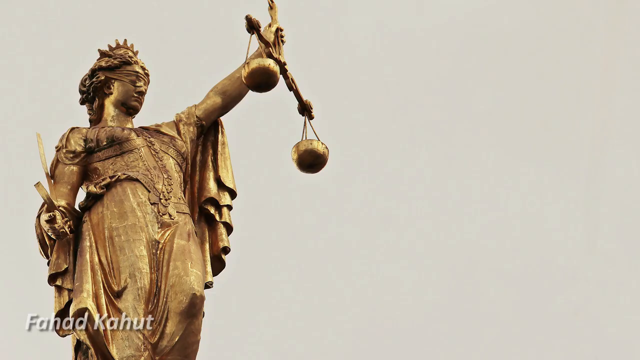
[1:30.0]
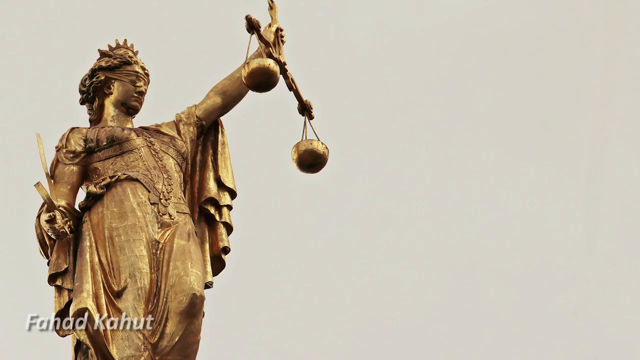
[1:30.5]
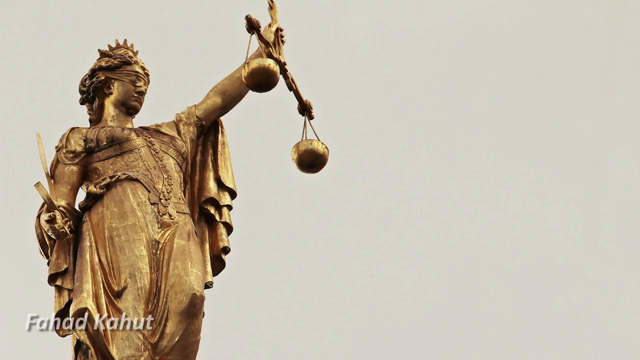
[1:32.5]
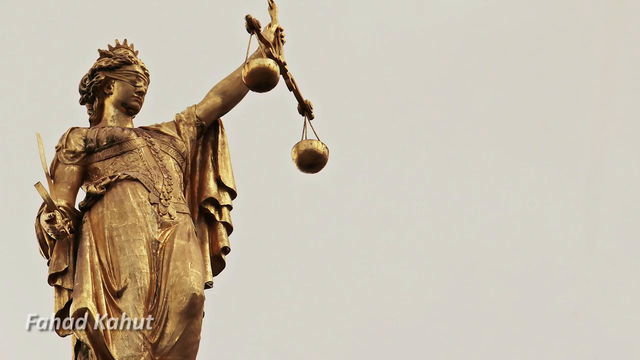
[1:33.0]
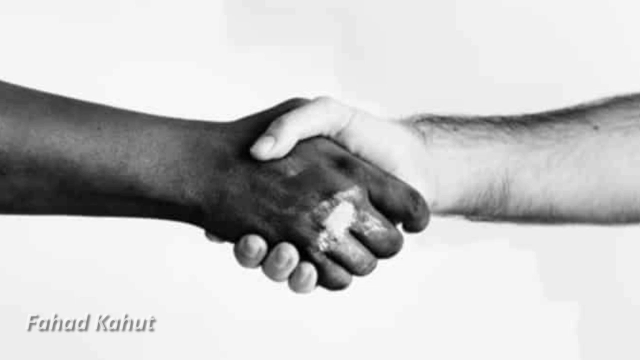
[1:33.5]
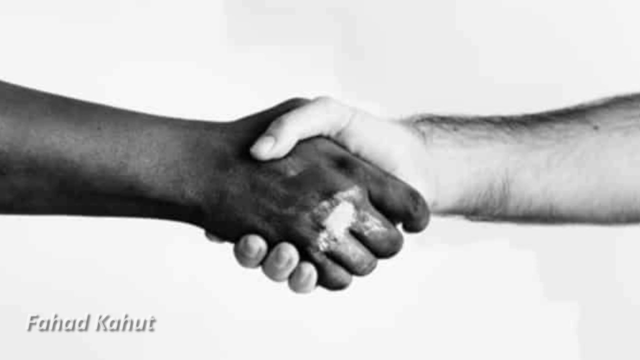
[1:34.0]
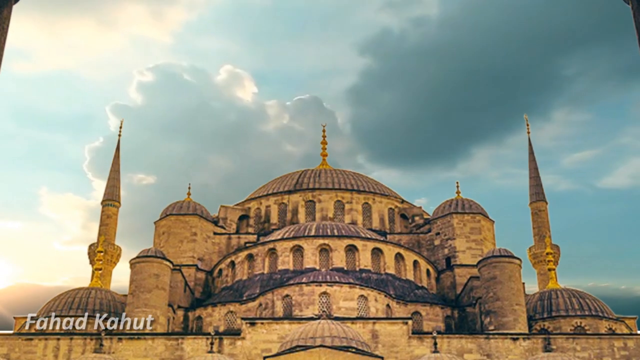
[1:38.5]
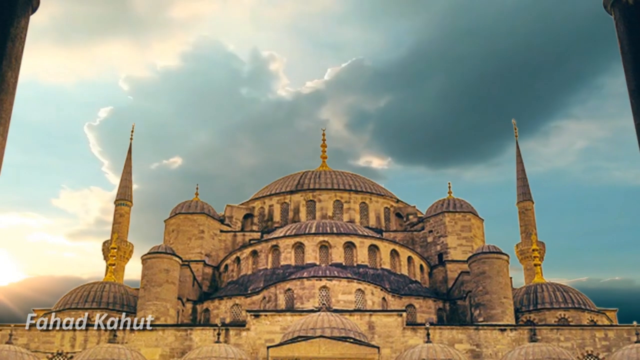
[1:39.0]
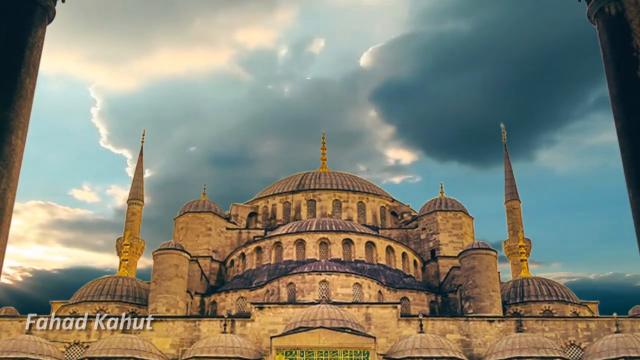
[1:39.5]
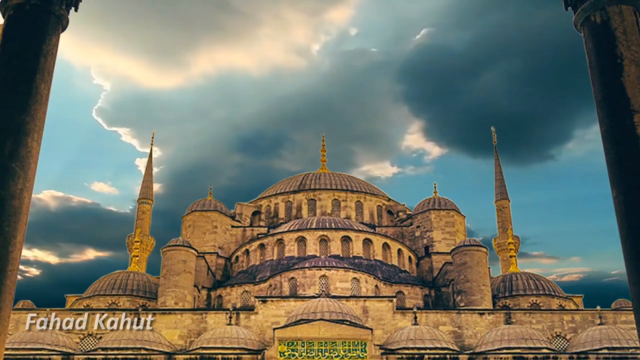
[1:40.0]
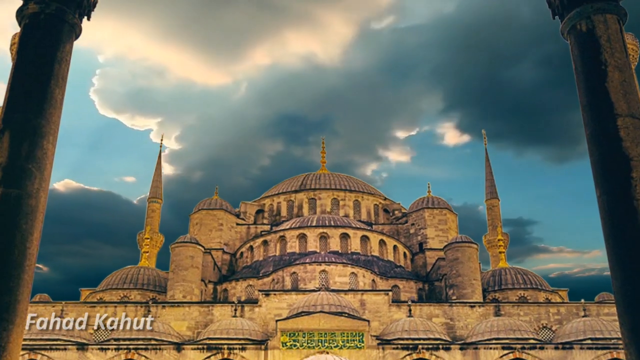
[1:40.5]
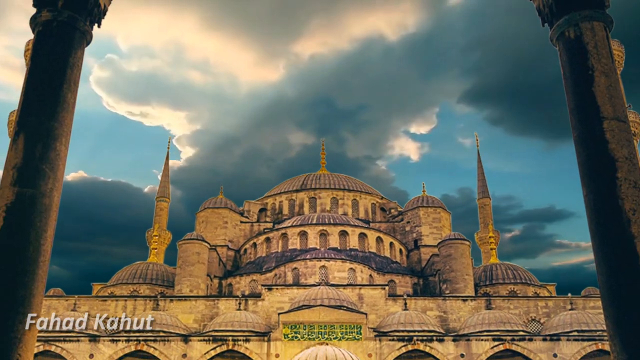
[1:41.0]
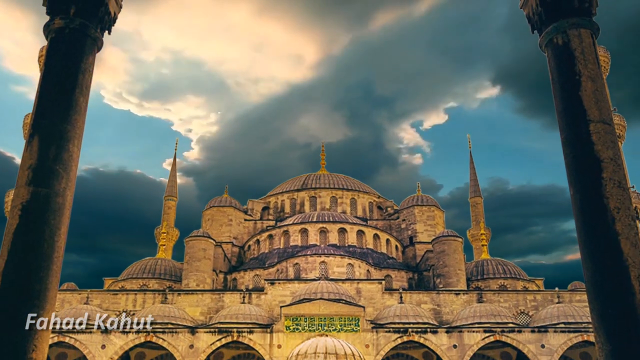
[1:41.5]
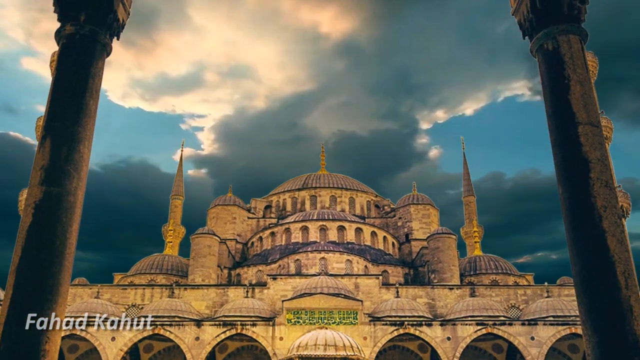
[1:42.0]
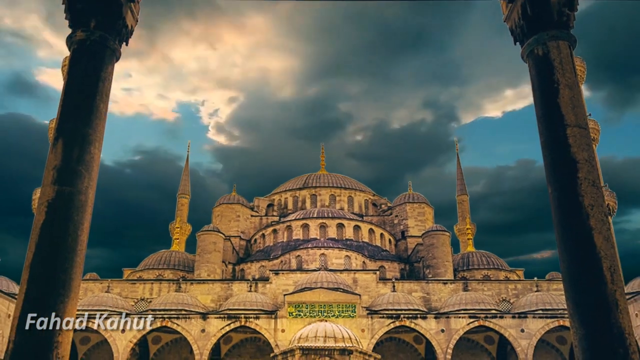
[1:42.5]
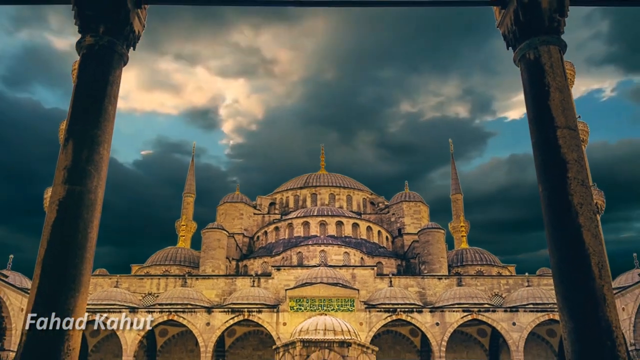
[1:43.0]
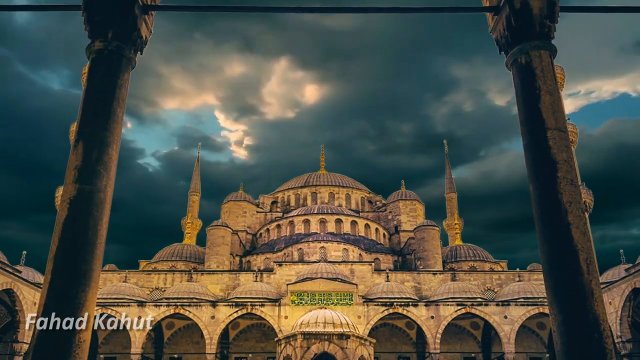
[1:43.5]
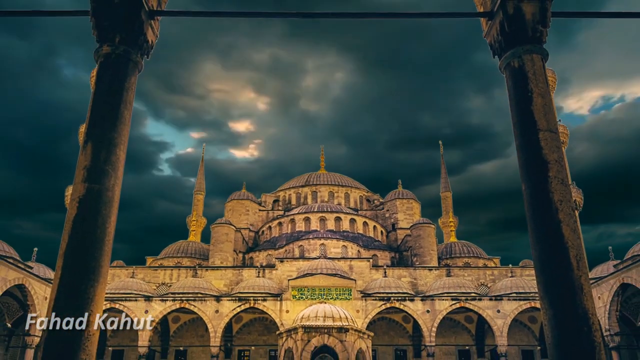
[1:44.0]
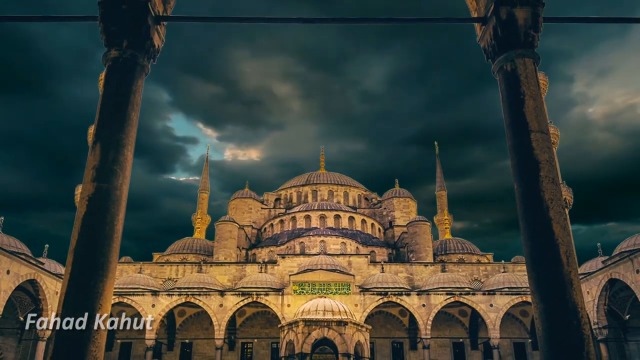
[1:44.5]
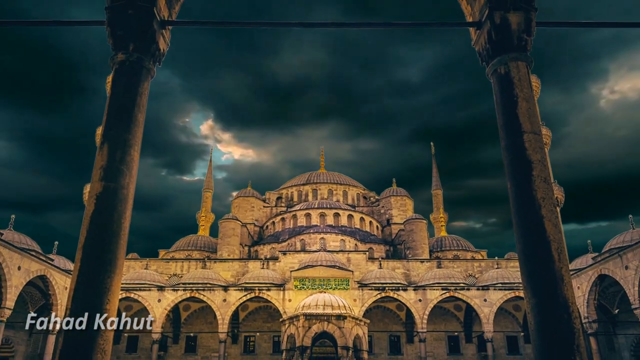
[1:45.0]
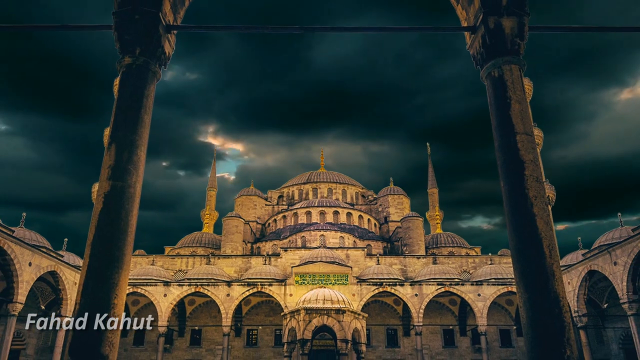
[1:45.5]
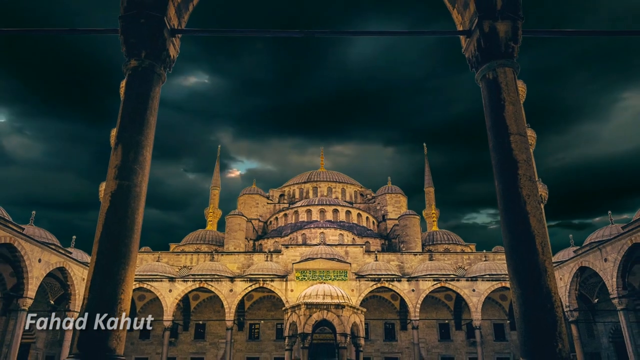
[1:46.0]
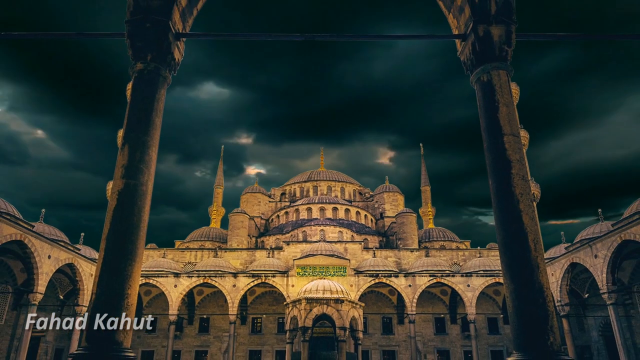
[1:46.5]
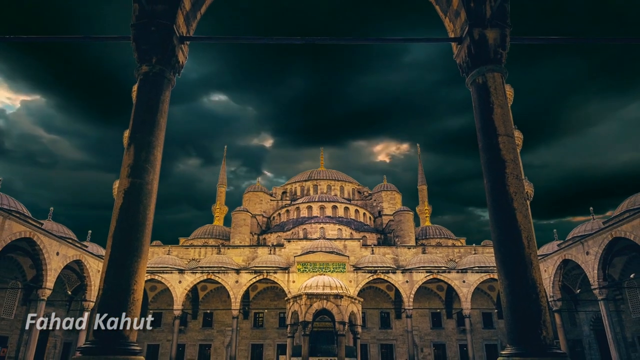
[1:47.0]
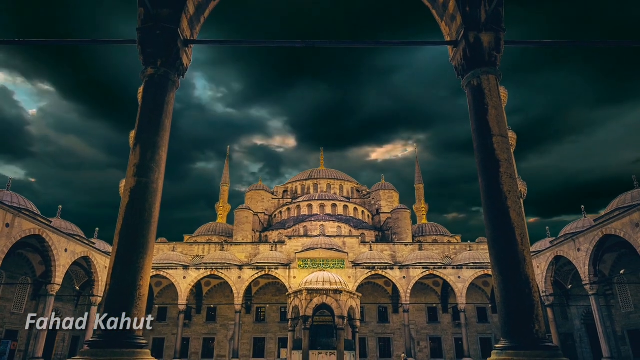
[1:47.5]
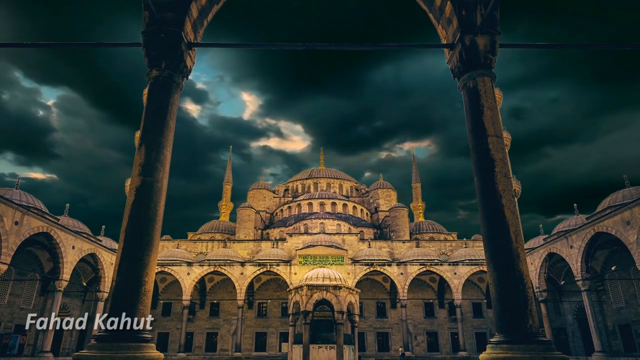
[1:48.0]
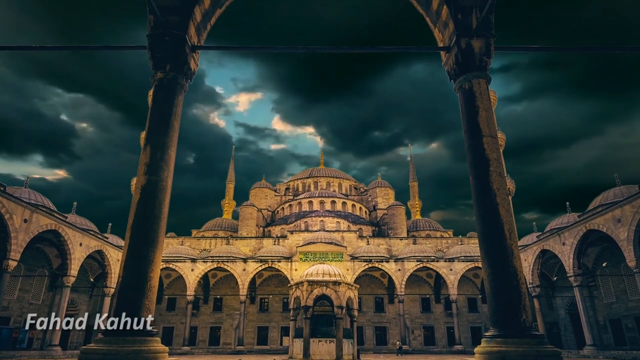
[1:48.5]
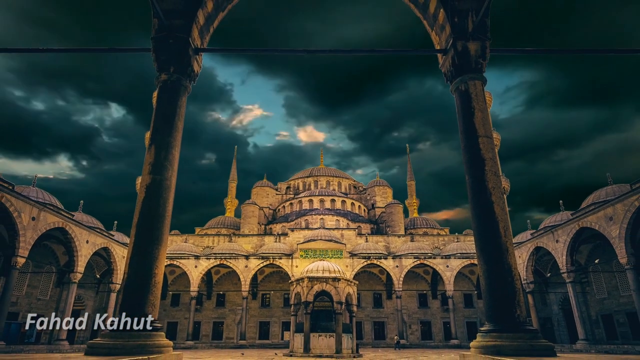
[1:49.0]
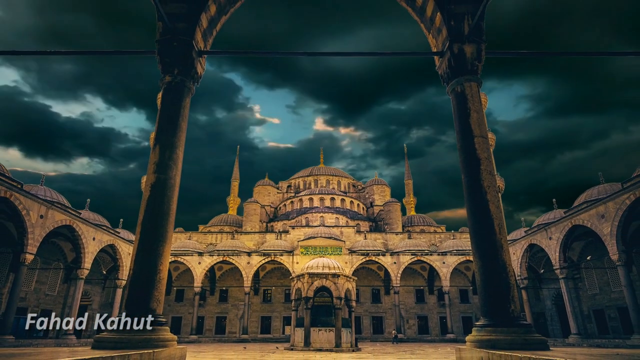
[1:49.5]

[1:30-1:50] The gold statue is on the screen, and the camera pans to a black hand and a white hand in a handshake gesture. The Taj Mahal is then shown, with animated blue and white clouds moving swiftly and intertwining in the background. The camera pans out to show the different entryways, moving steadily as it zooms in and out to show the full picture of the Taj Mahal.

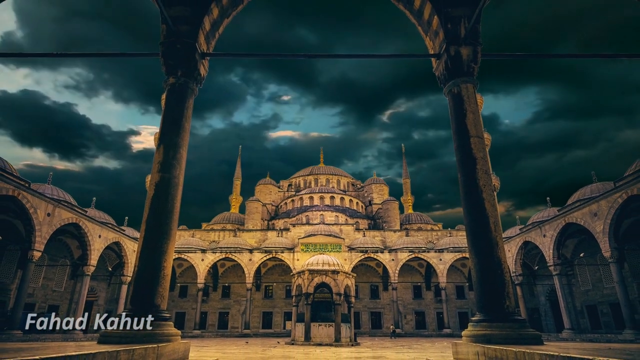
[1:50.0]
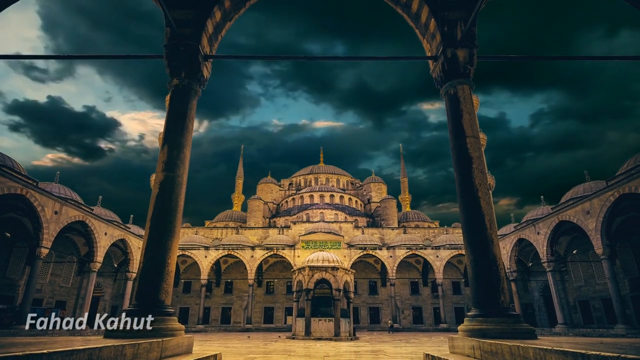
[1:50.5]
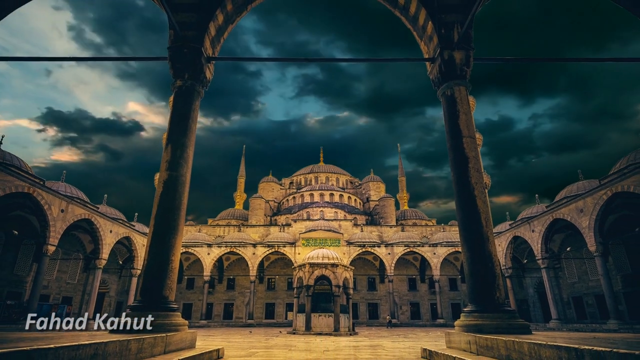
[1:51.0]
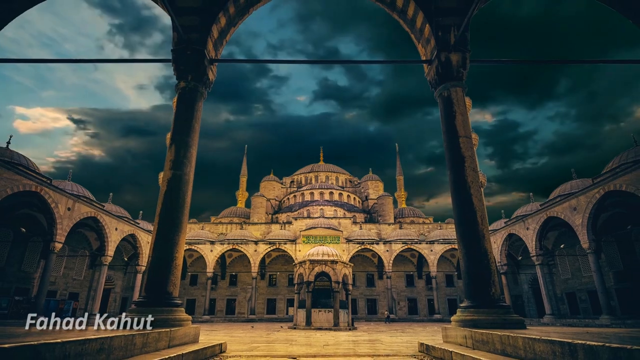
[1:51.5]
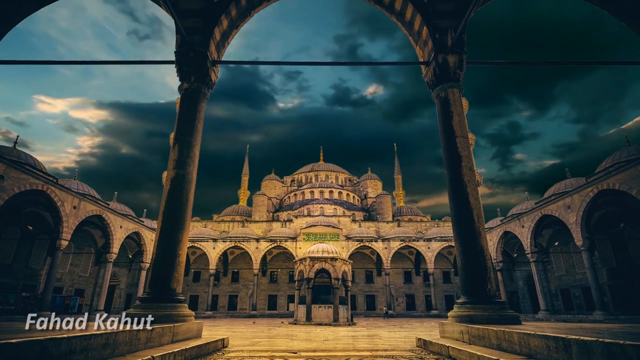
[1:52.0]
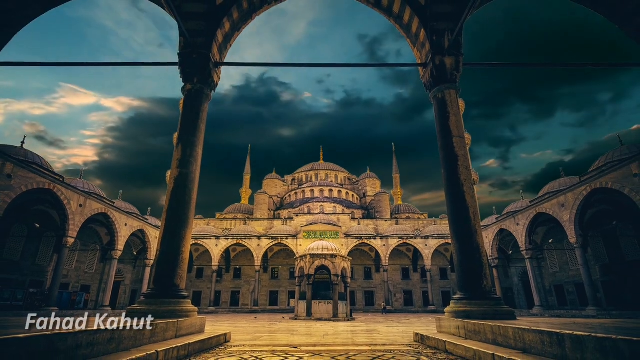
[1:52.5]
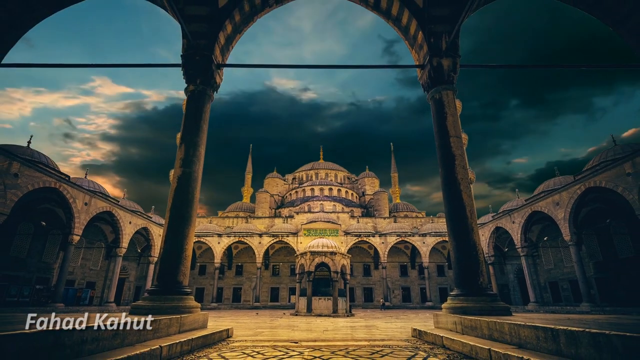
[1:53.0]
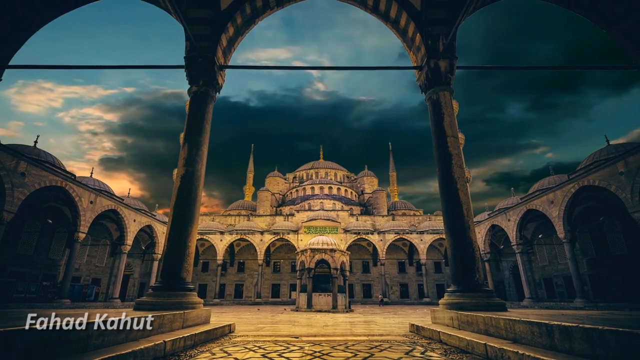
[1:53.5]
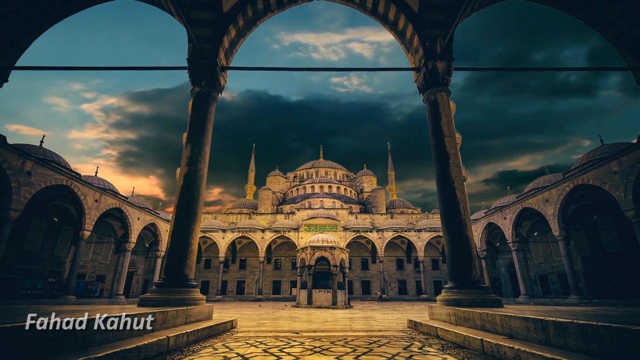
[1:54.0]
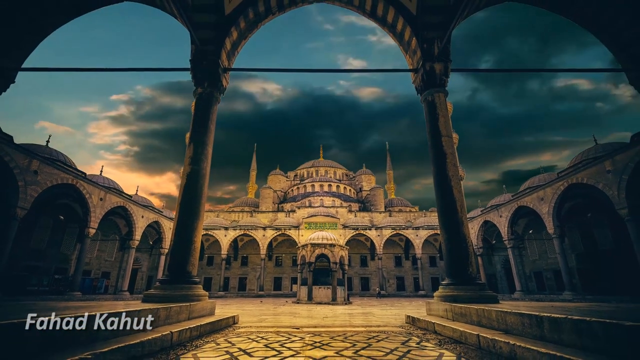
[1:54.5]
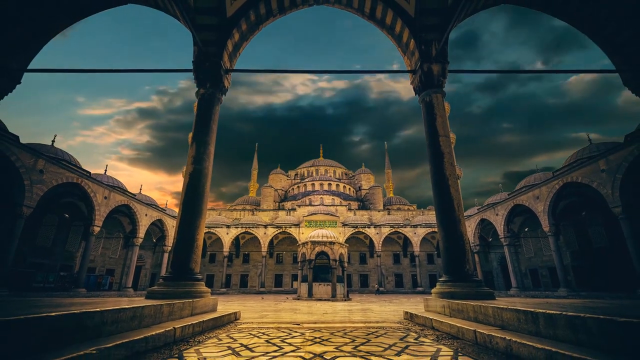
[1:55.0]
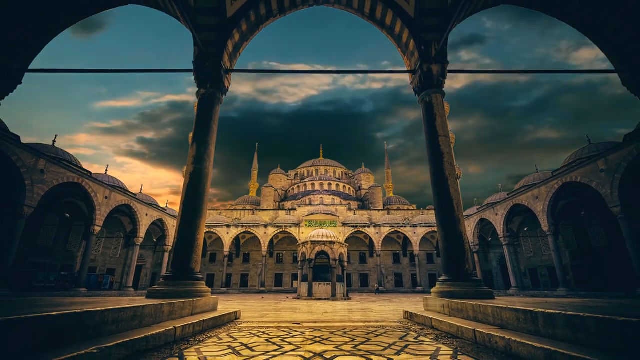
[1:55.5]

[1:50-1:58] The Taj Mahal appears again, and the camera zooms out from it while animated blue and white clouds move hastily in the background. As the camera continues to zoom out, the floor of the Taj Mahal and its different entryways come into view. The scene then moves to a black screen at the end of the video.